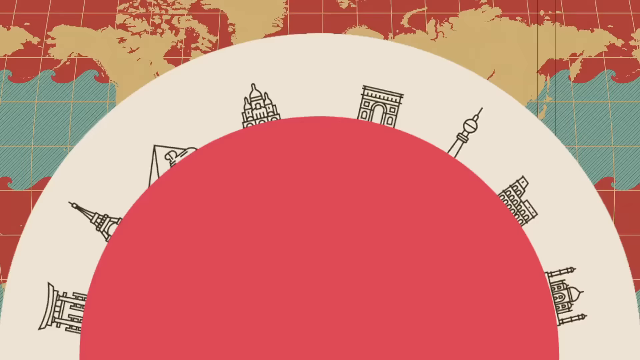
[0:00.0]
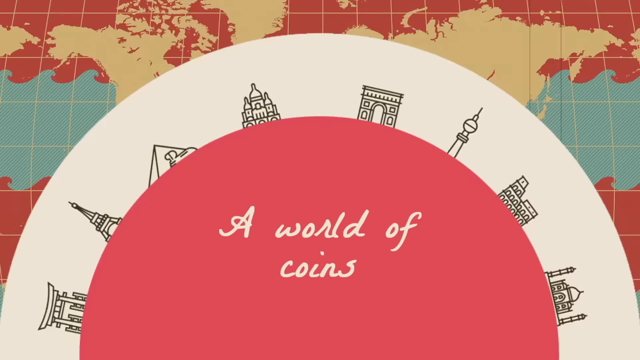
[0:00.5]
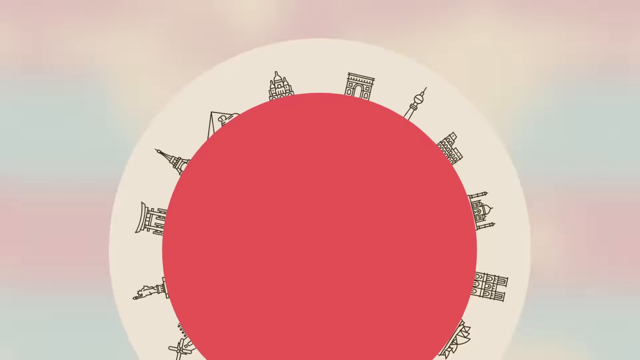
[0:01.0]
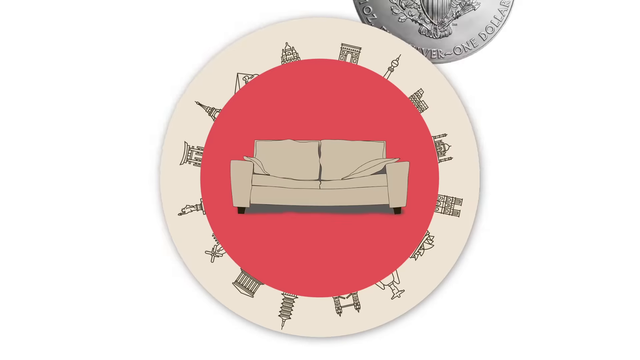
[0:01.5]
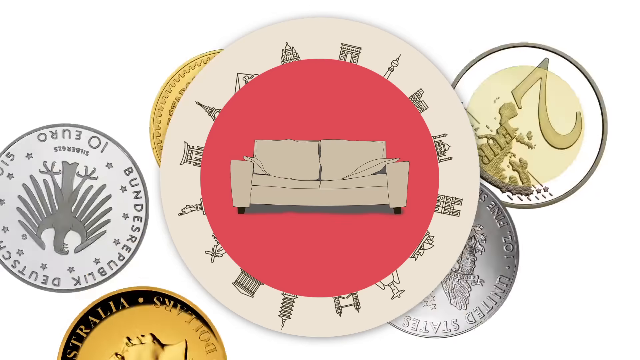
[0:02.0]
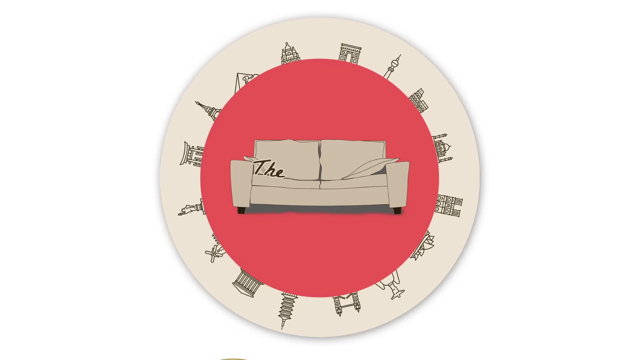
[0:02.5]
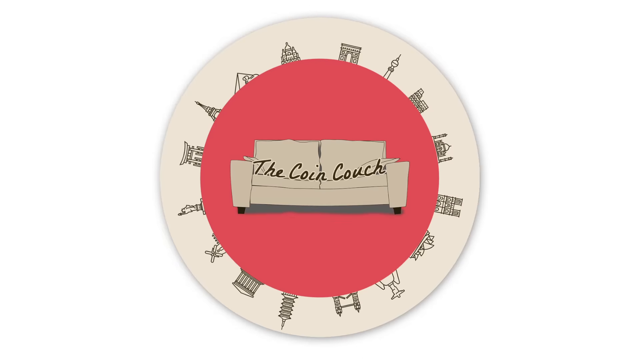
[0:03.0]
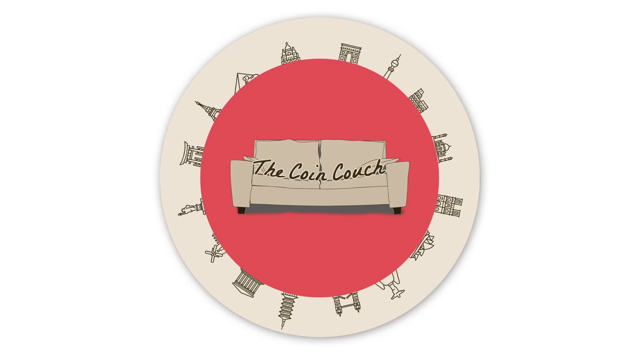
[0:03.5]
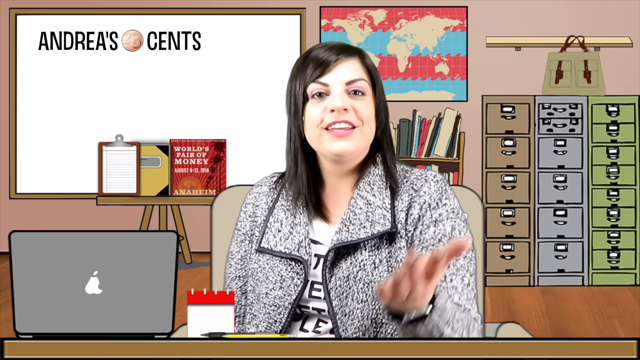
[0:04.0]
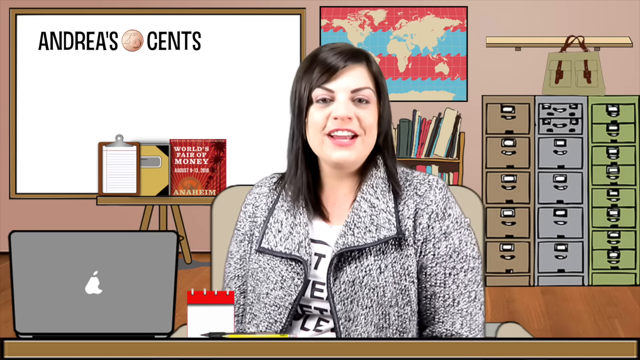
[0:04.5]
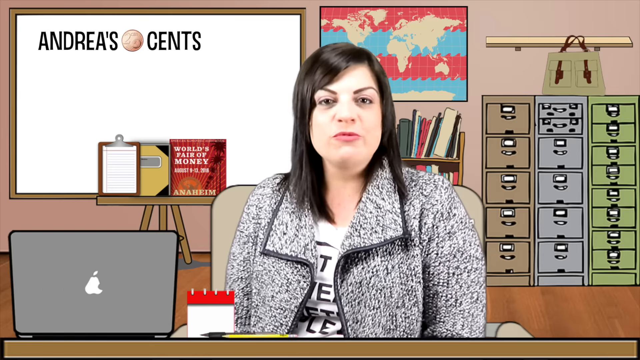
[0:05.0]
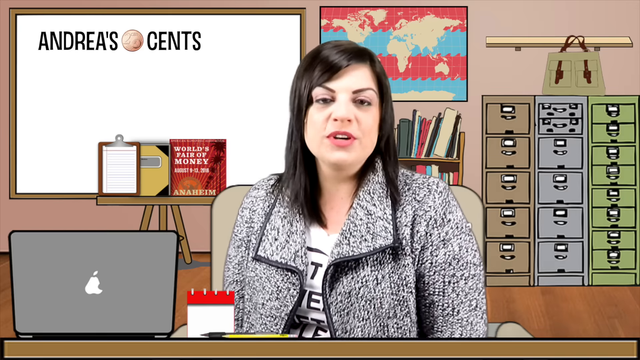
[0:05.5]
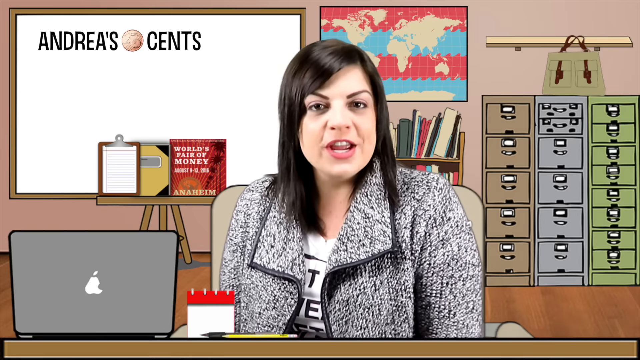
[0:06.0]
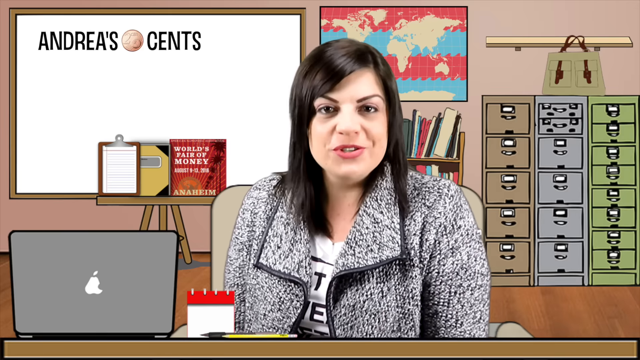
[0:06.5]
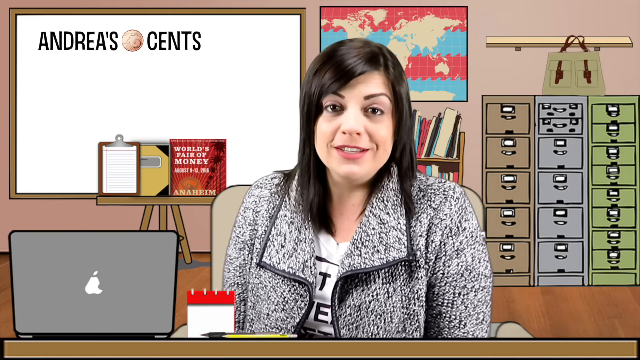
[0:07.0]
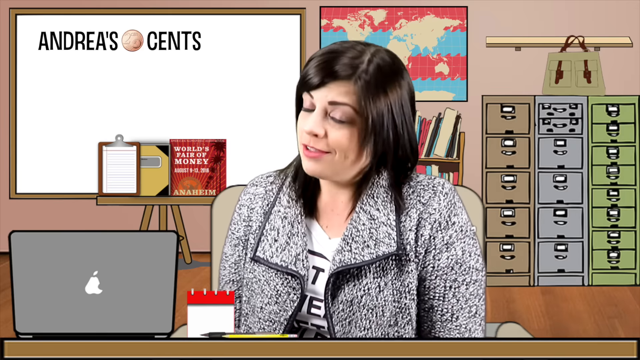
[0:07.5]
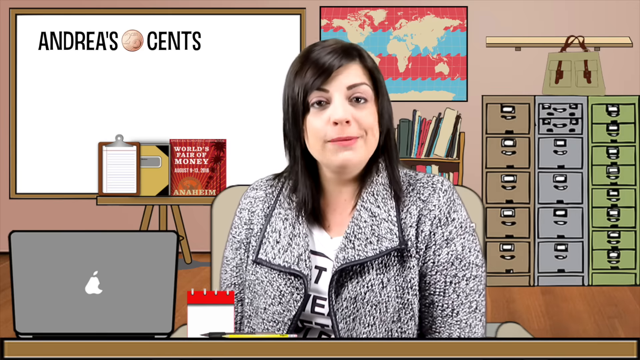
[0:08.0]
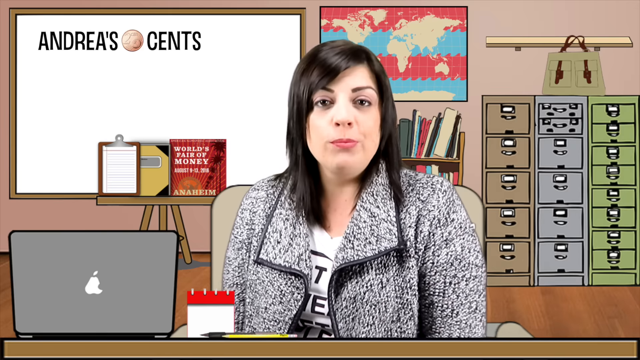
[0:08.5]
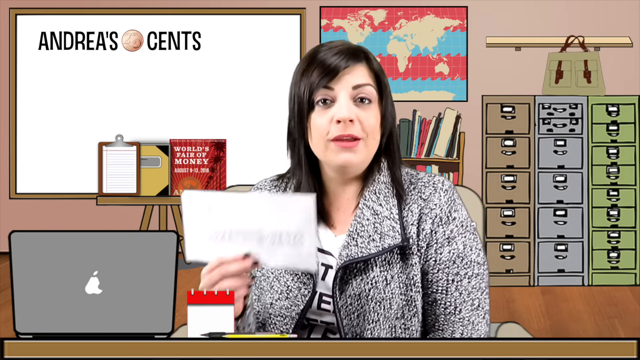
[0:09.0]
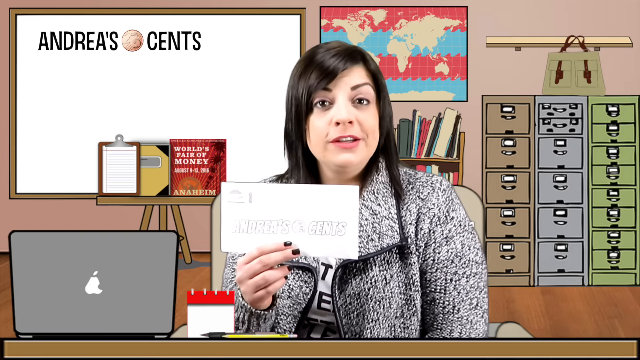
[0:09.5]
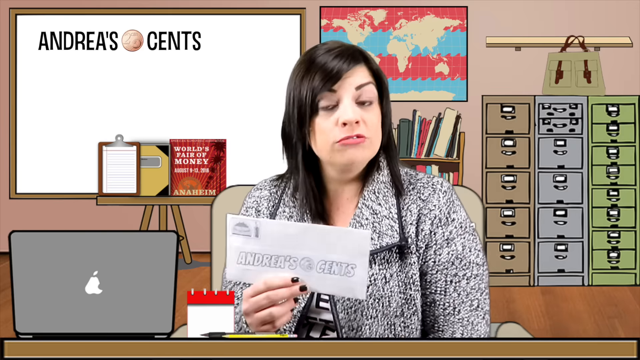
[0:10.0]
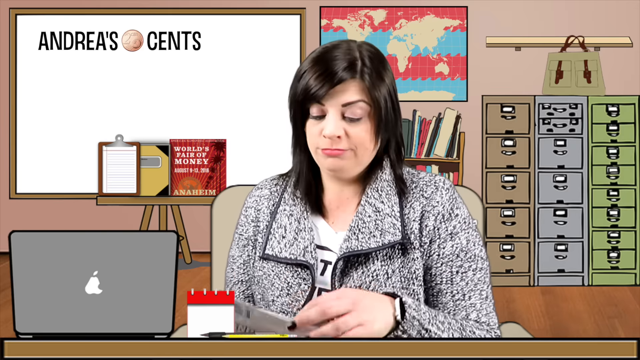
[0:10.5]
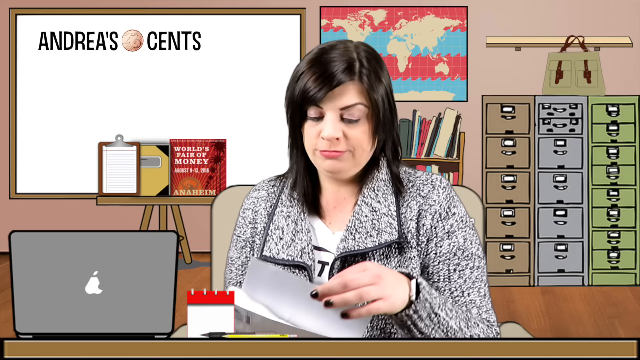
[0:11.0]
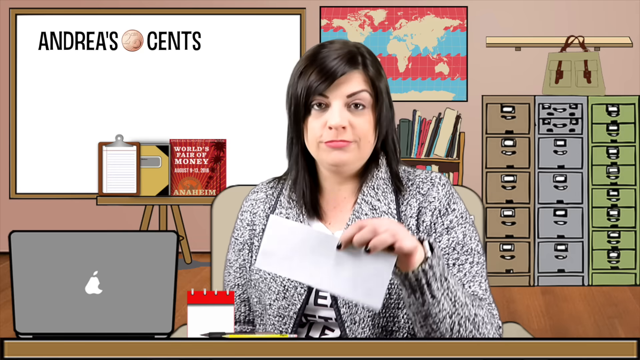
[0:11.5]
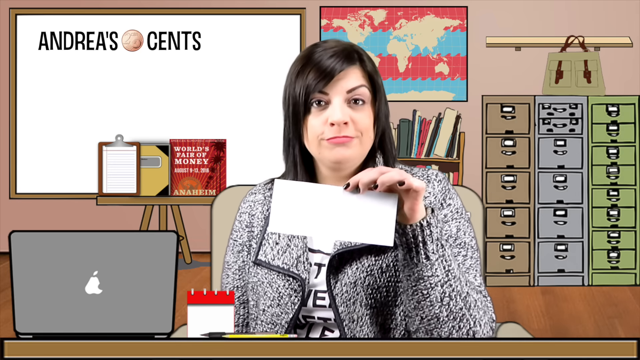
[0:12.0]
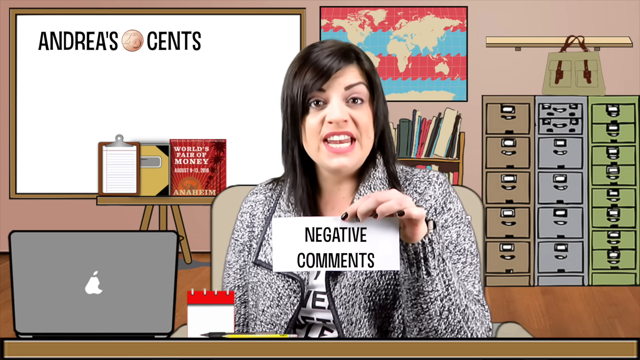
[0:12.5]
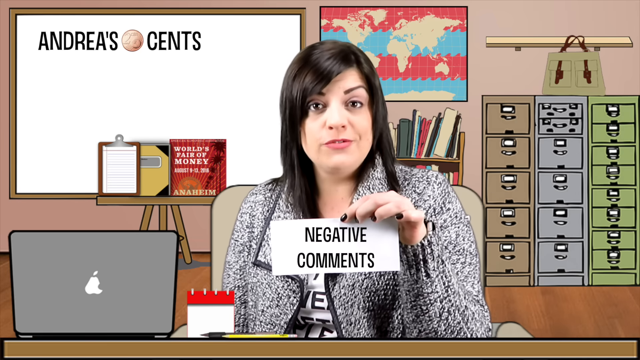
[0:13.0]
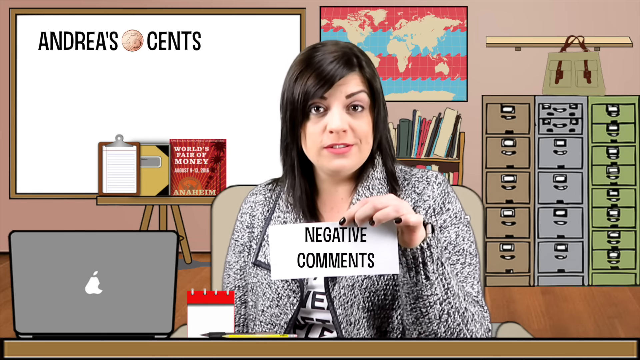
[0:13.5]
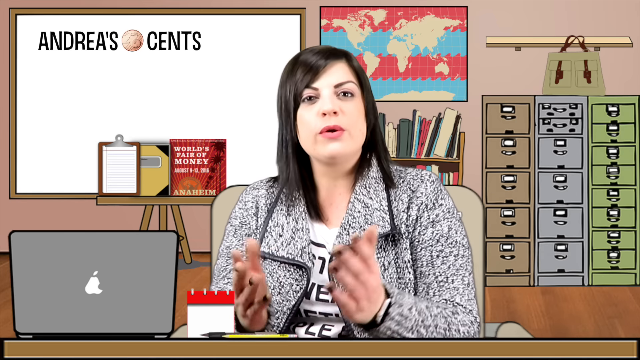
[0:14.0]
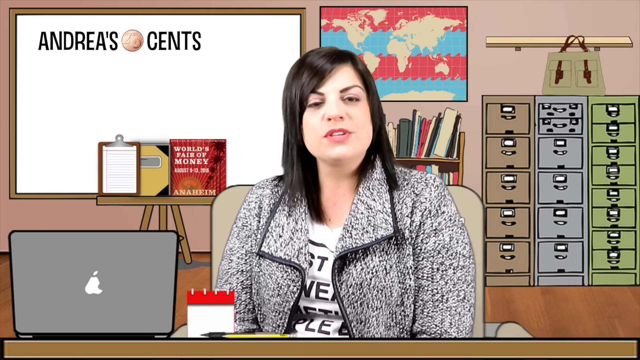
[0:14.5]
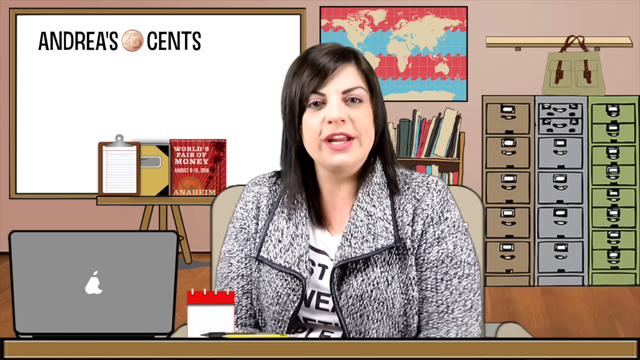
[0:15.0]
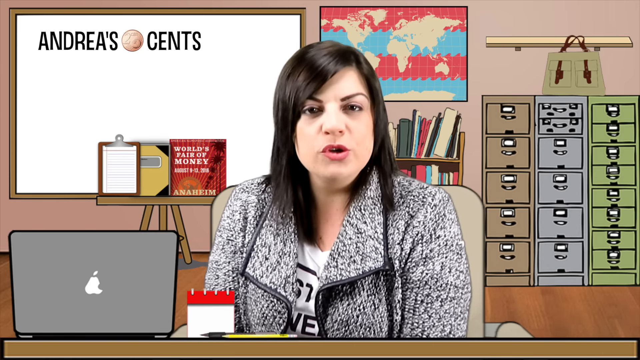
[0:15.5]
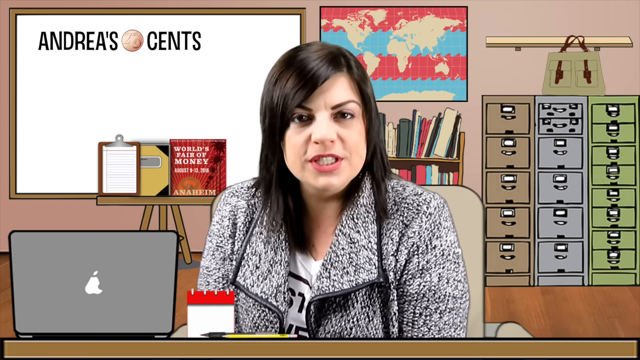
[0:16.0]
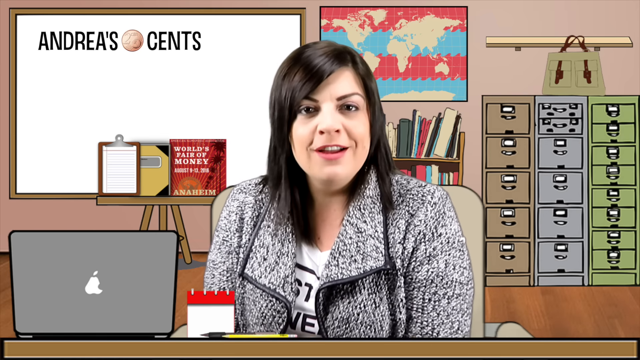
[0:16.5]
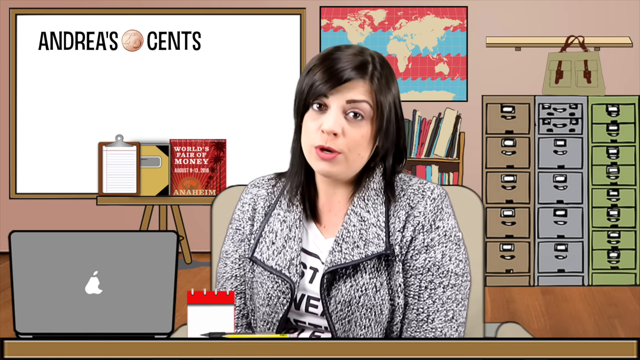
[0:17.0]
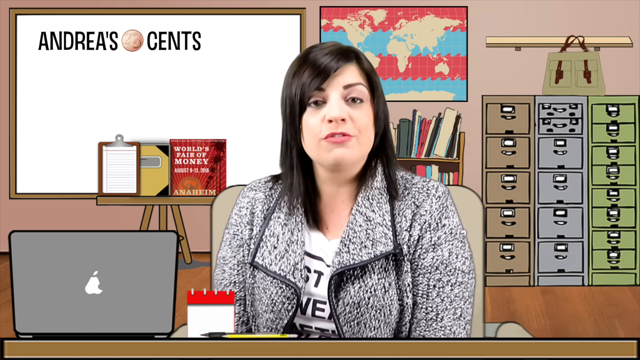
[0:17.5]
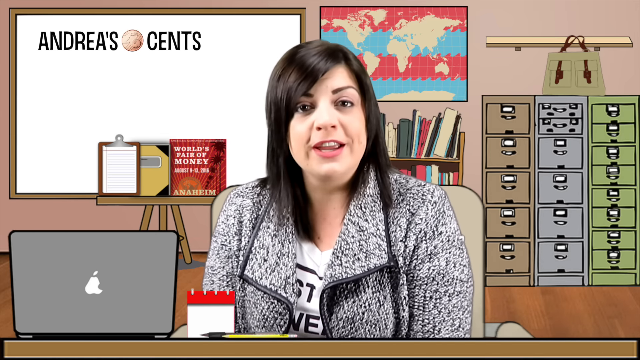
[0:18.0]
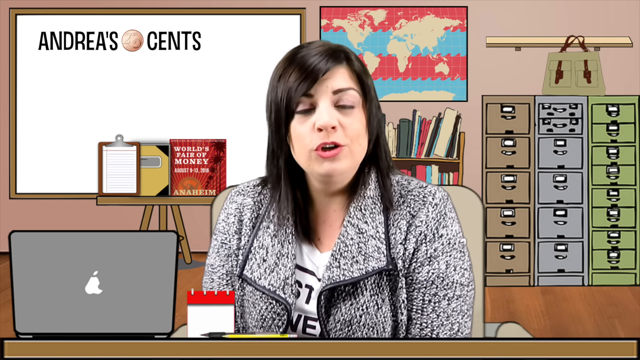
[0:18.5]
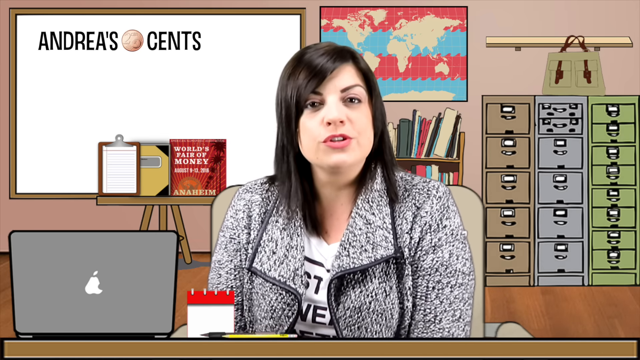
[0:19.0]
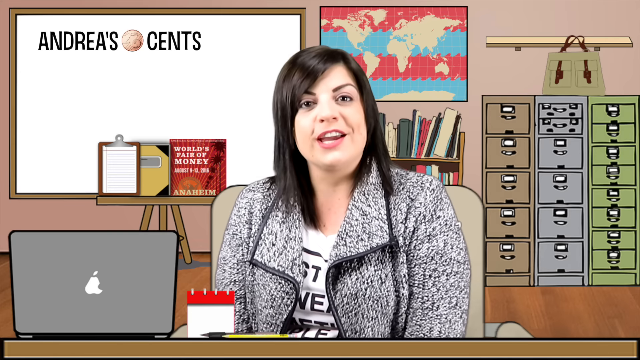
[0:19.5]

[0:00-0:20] A spinning coin appears with text that says "a world of coins." The background is a red circle with a white outline and drawings of different buildings or different cultures. The logo then shows a white couch and text that says "the coin couch." A woman wearing a grey coat and a white t-shirt is introduced. On her right are cabinets in three rows: a green row on the right, a blue row in the middle and a brown row on the left. Behind her is a bookshelf with some animated books, and a world map is pasted on the wall, which is a bit pink. On the left is a whiteboard with "Andreas Cents" written on it. In front of the whiteboard is a wooden table with three books, one of which reads "World's Fair of Money." The woman holds an envelope and shows it to the viewer, then opens it and pulls out a piece of paper. On her left is an animated MacBook, and there is also a calendar book on her left. She faces the viewer, talking and gesturing with her hands.